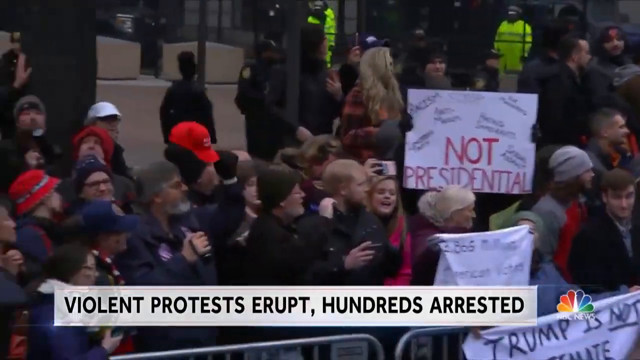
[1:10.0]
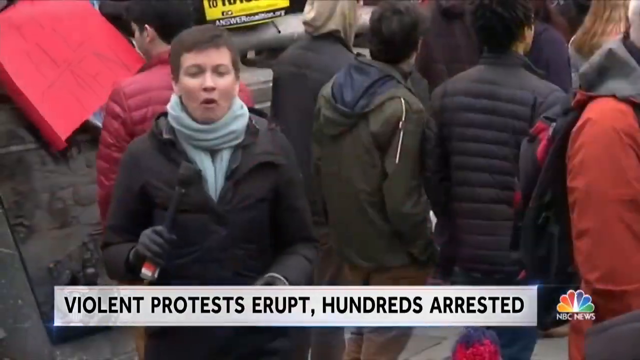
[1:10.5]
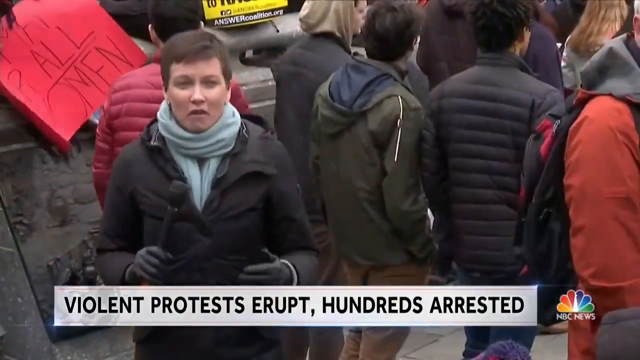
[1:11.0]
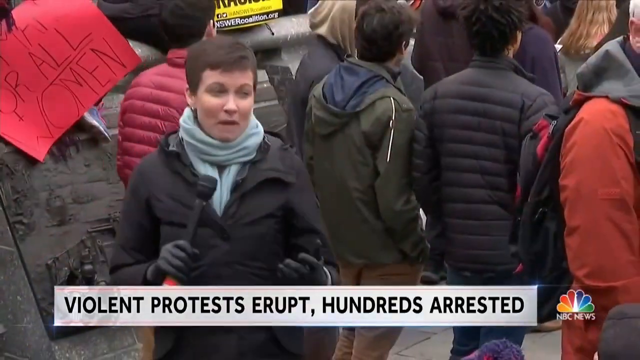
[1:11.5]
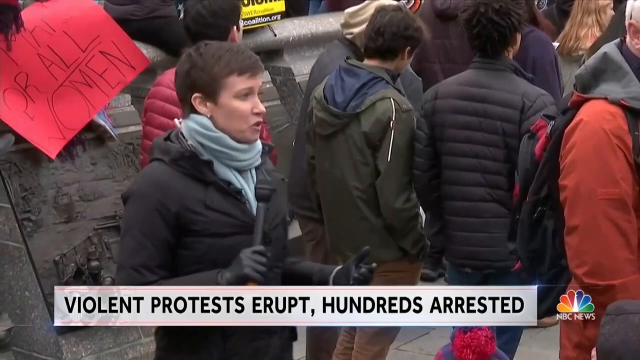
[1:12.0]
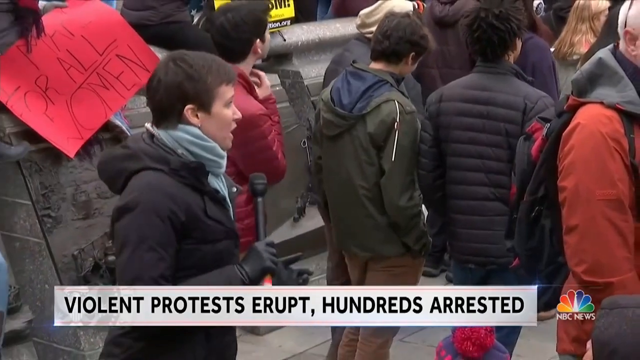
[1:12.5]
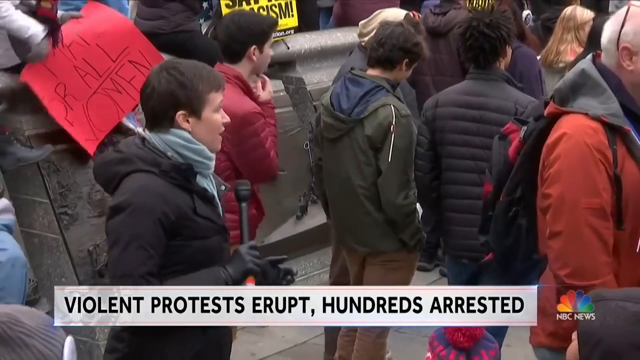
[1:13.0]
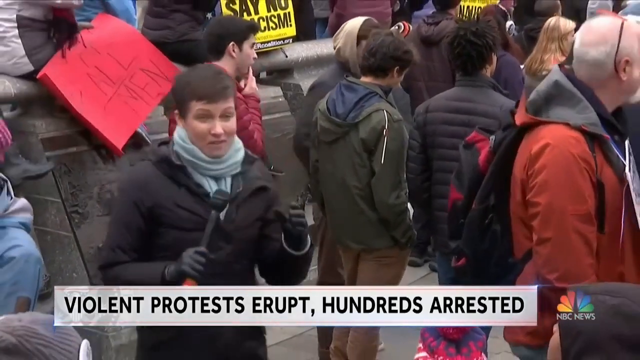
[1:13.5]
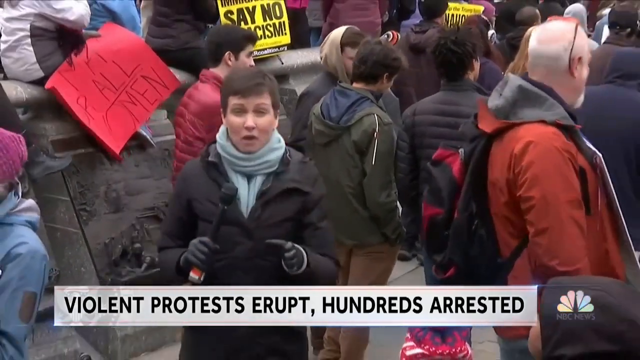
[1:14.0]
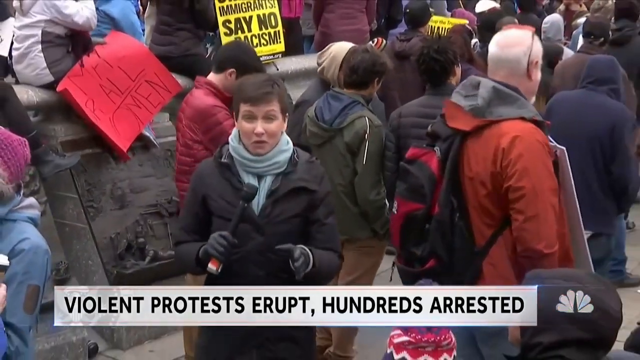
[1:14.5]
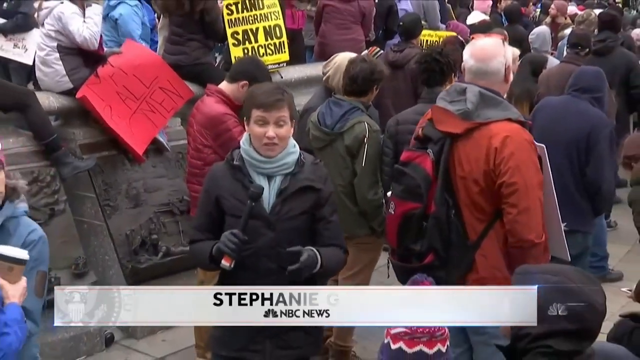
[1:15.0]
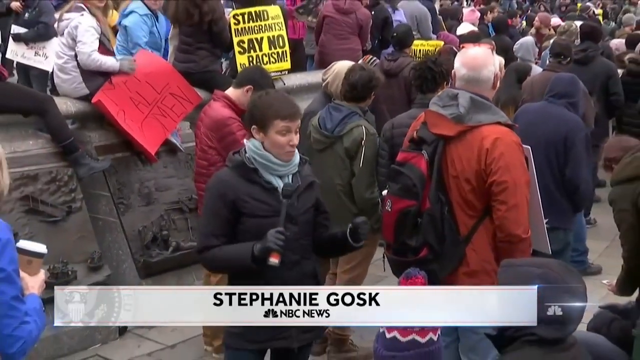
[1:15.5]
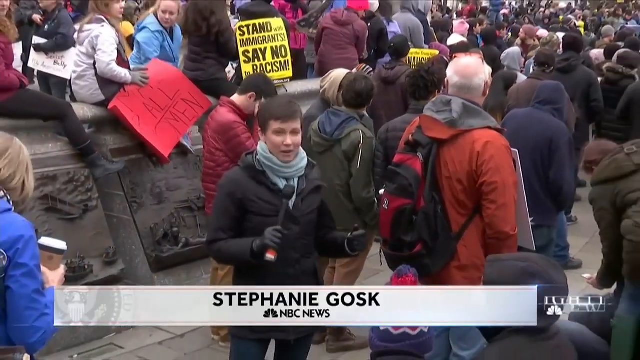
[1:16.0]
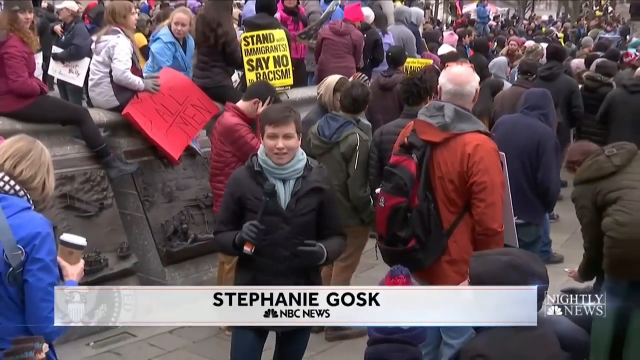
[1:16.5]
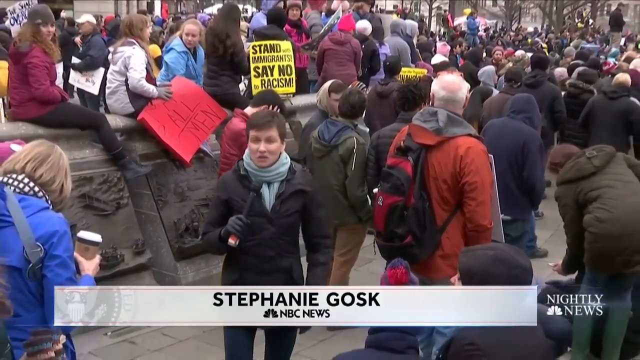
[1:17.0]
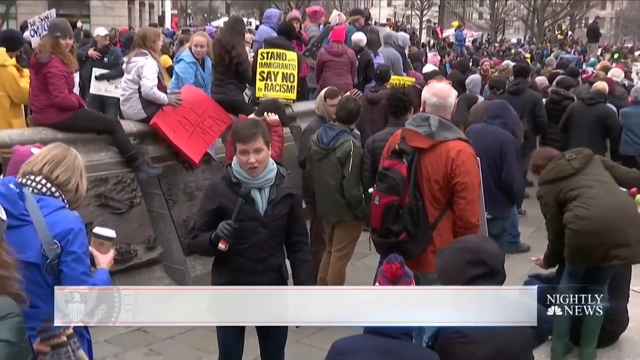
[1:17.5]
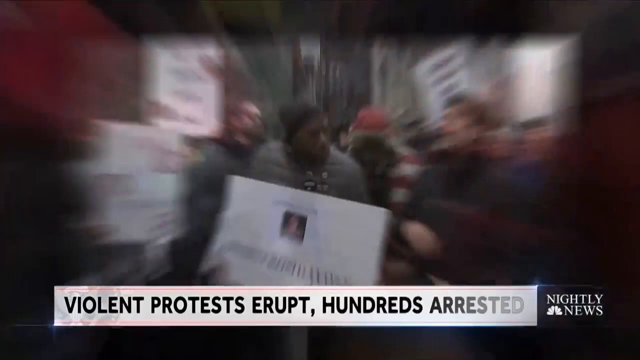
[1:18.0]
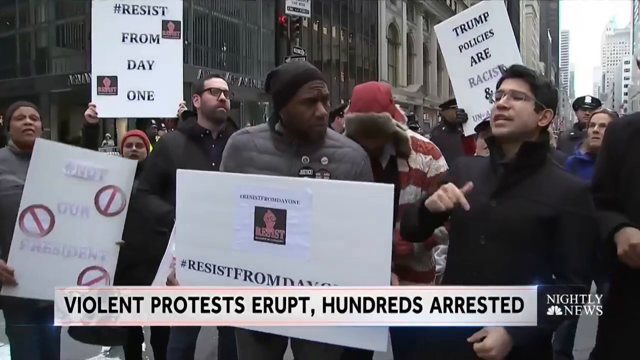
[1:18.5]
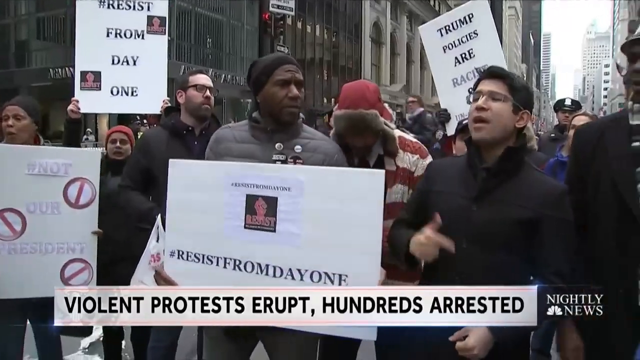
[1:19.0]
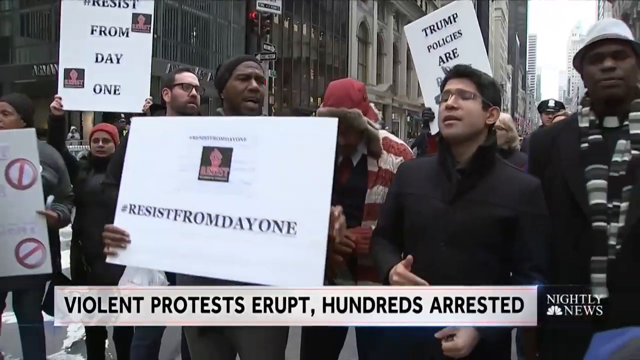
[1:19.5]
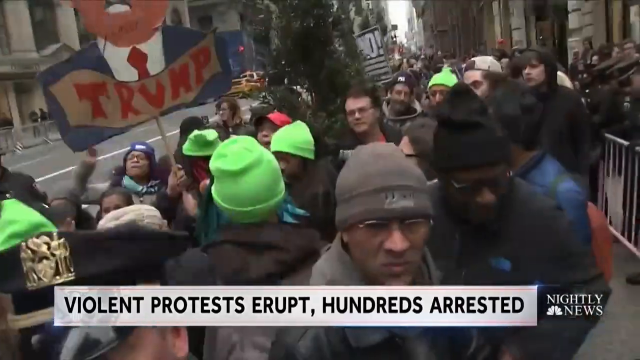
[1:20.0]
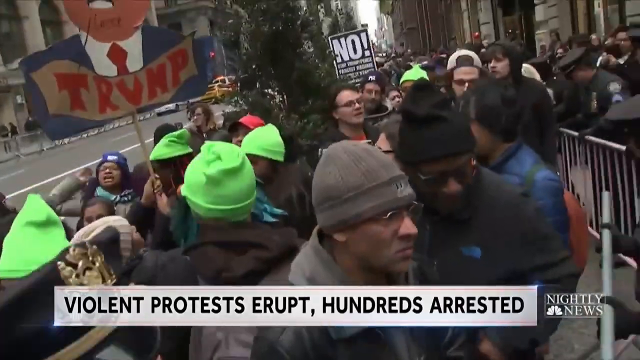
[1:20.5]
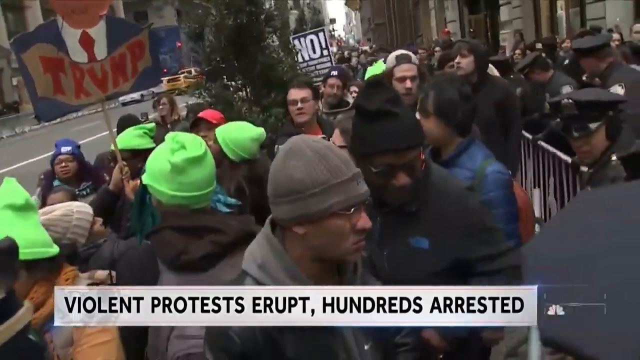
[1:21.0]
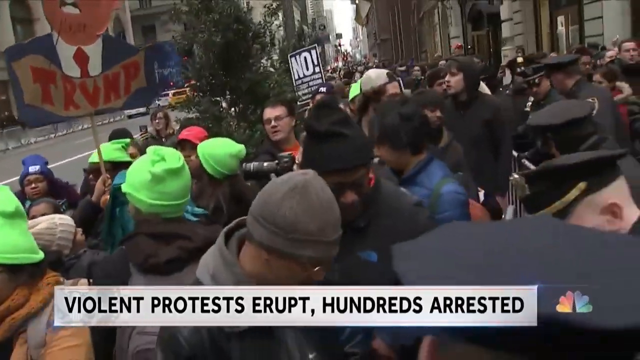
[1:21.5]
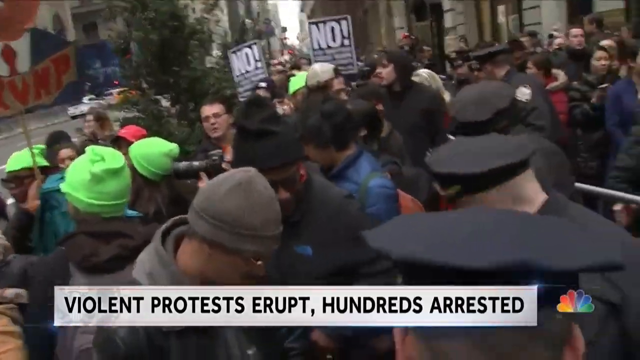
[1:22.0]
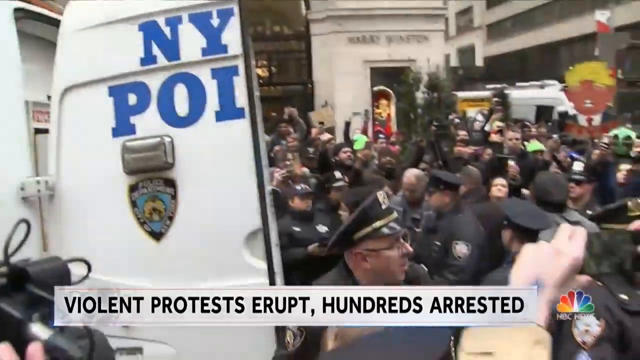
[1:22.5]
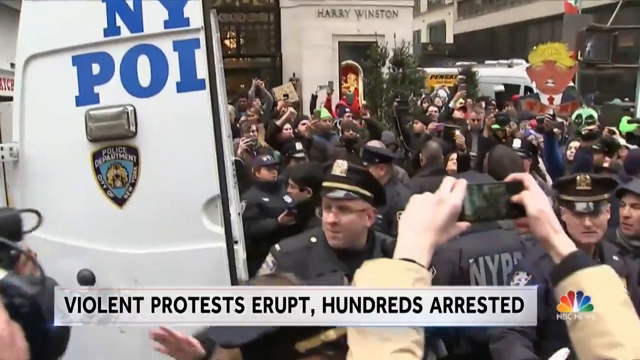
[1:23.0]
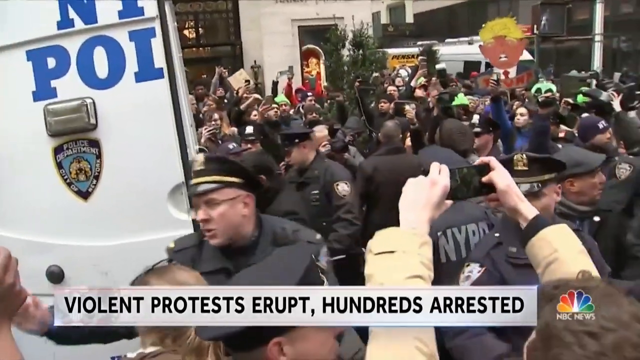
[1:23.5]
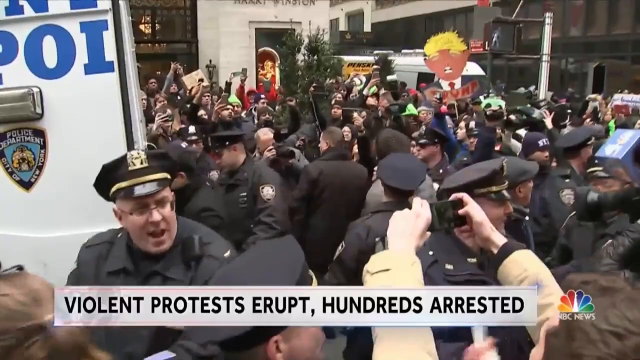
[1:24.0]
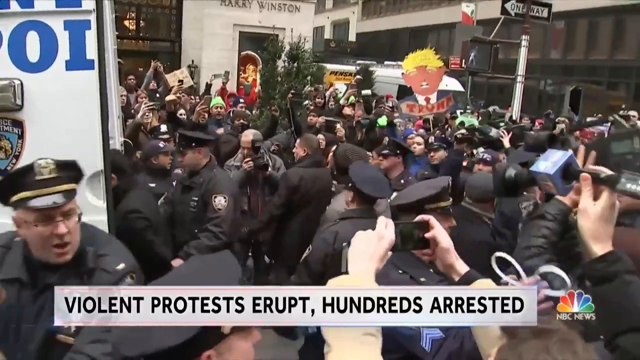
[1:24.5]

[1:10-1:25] A reporter in a black coat and a teal scarf talks to the camera. Behind her, many people in coats of various colors face toward the inauguration. People hold signs, one reading "stand behind immigrants, say no to racism." Some people wear lime green hoodies and lime green hats. There is a large police presence. A woman in a blue jacket holds a Starbucks coffee cup, and a man in an orange jacket has a black and red backpack. Some of the police hold plastic handcuffs.